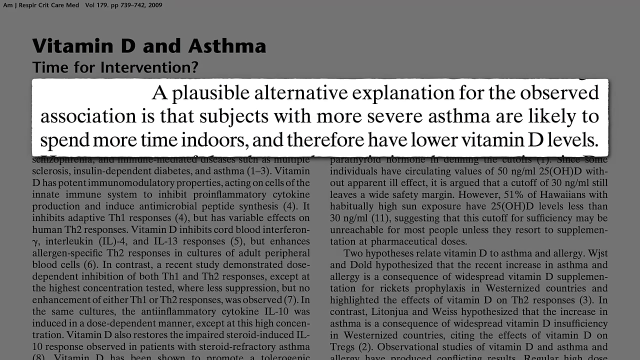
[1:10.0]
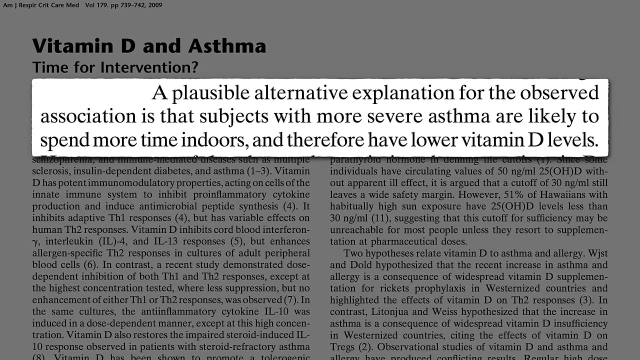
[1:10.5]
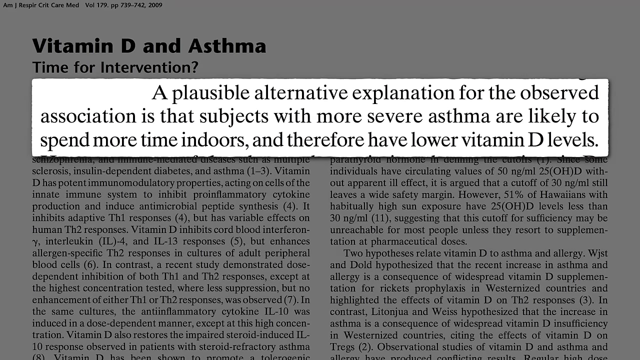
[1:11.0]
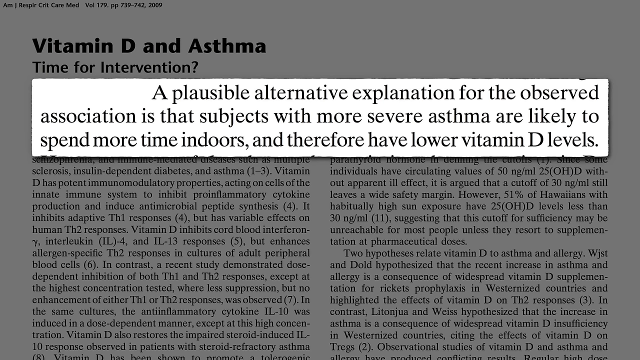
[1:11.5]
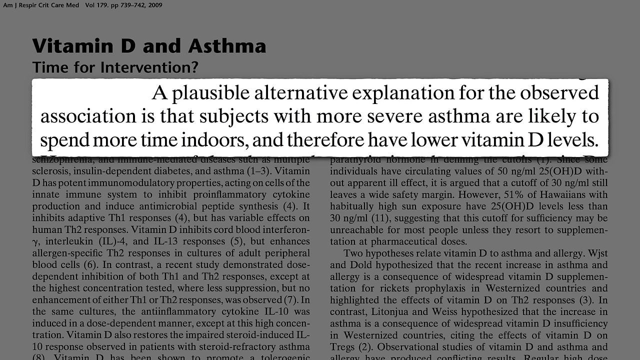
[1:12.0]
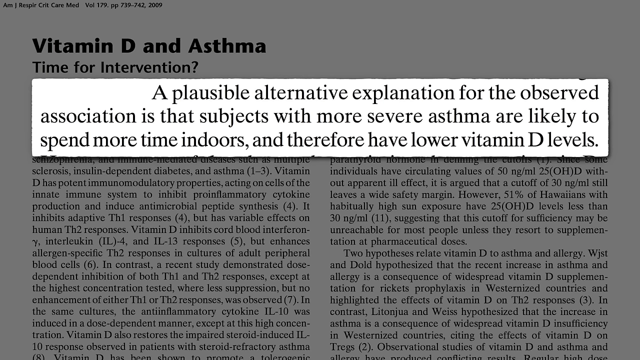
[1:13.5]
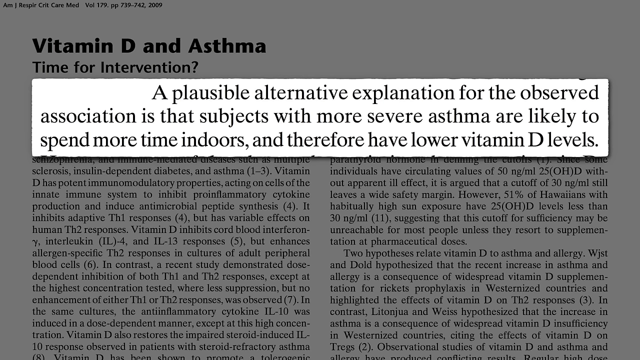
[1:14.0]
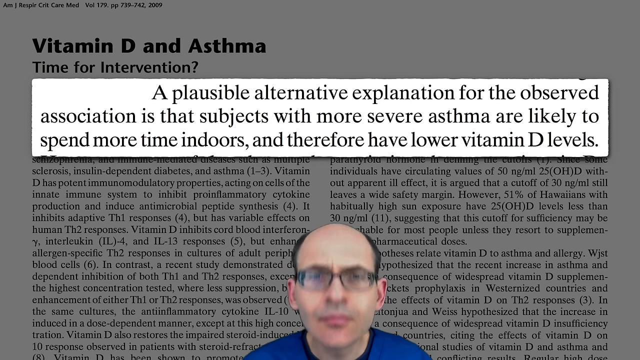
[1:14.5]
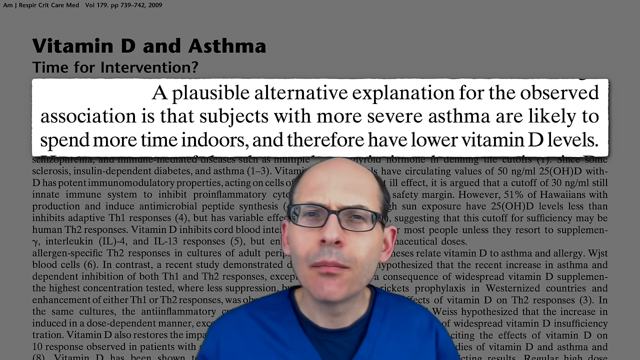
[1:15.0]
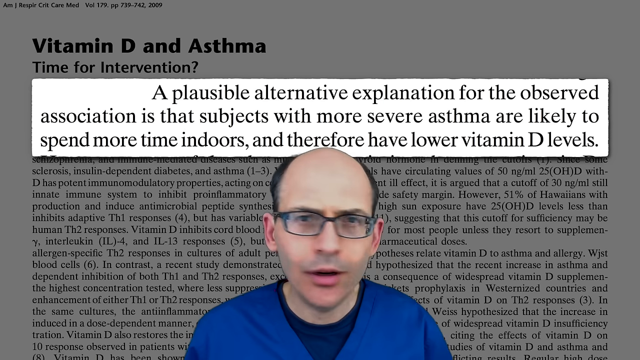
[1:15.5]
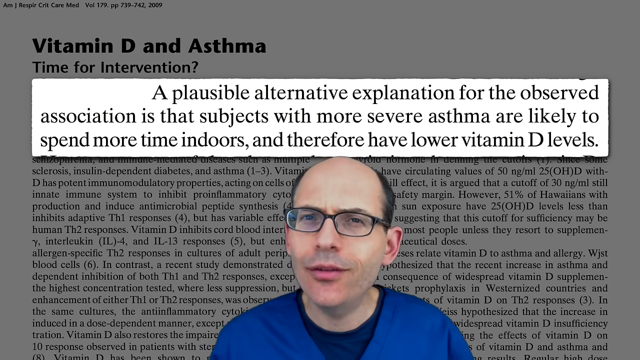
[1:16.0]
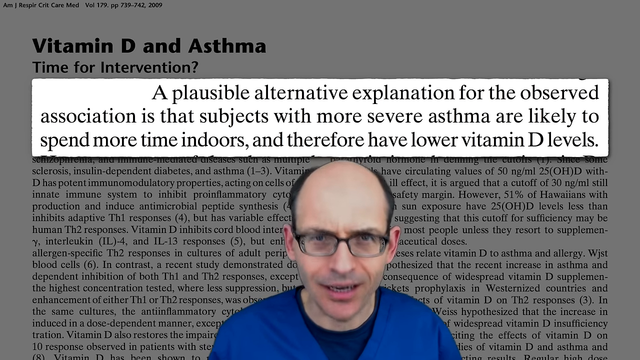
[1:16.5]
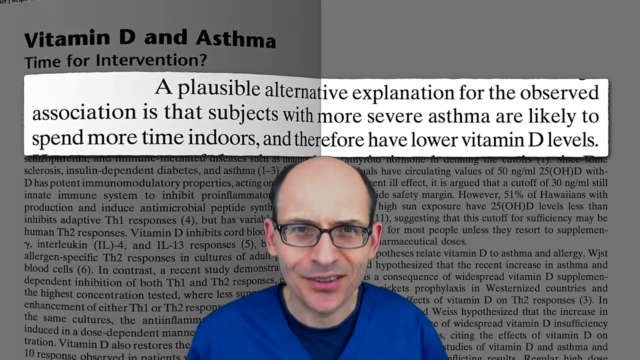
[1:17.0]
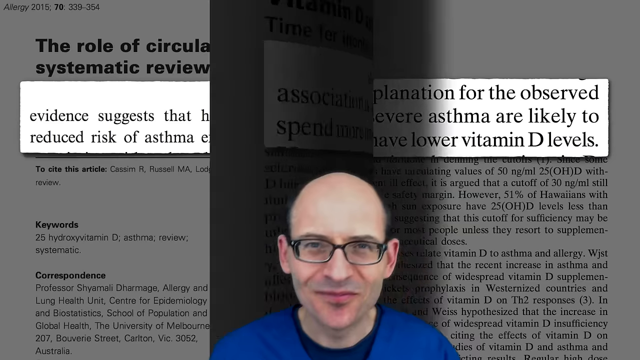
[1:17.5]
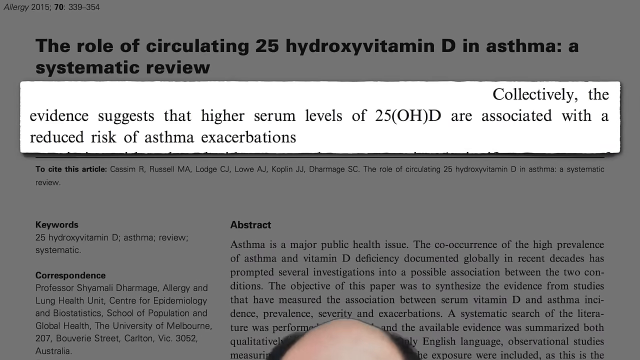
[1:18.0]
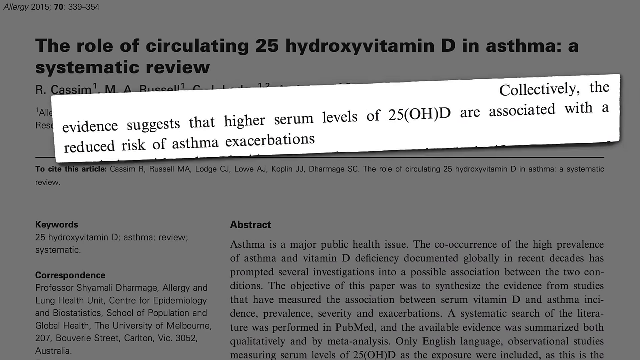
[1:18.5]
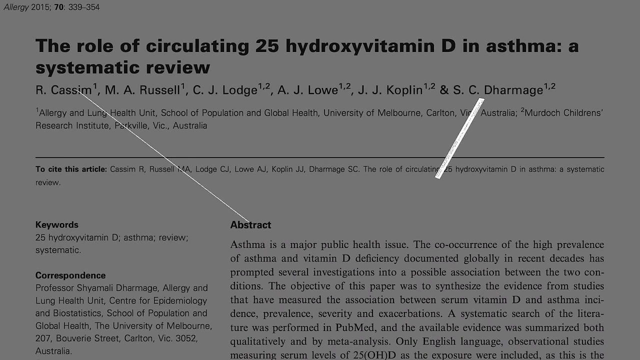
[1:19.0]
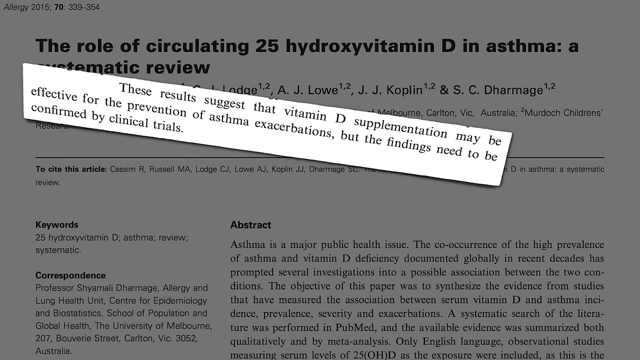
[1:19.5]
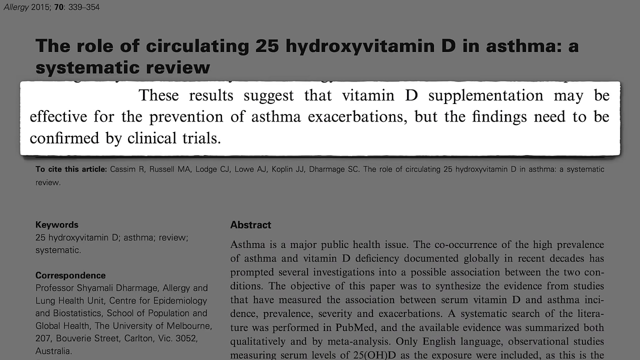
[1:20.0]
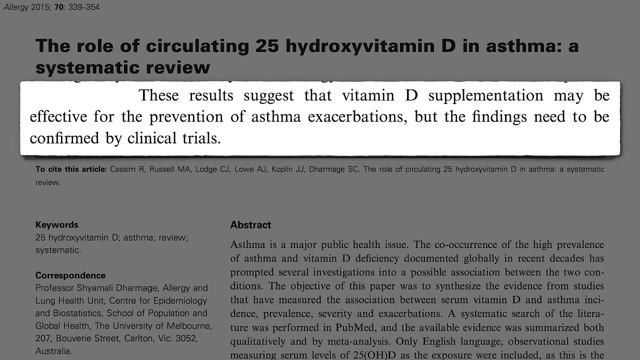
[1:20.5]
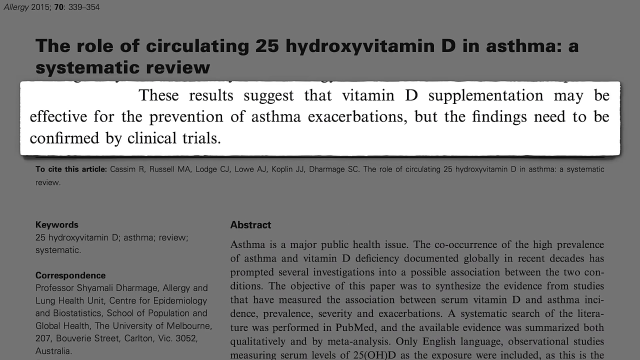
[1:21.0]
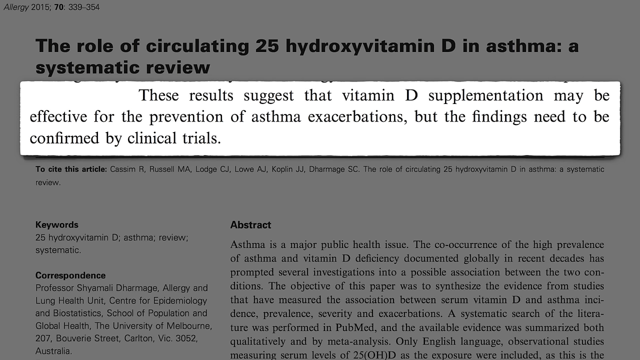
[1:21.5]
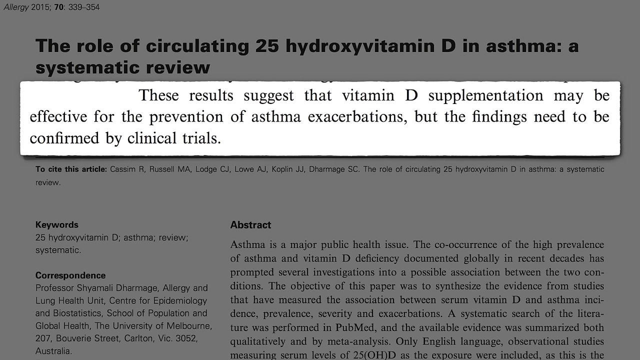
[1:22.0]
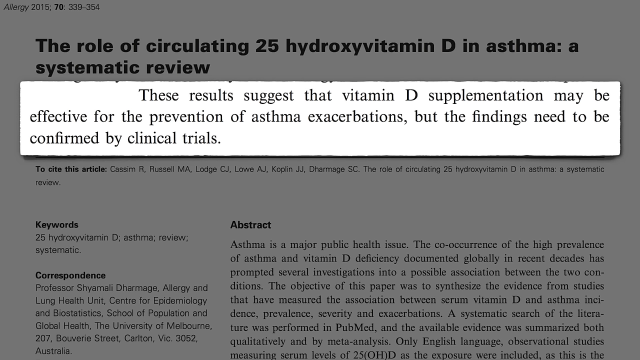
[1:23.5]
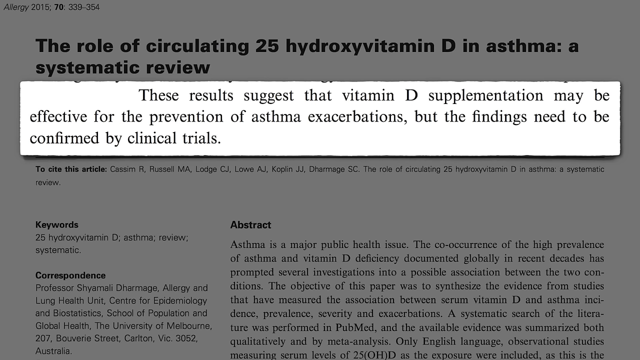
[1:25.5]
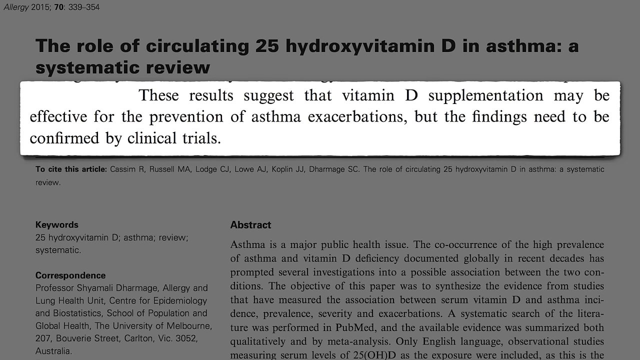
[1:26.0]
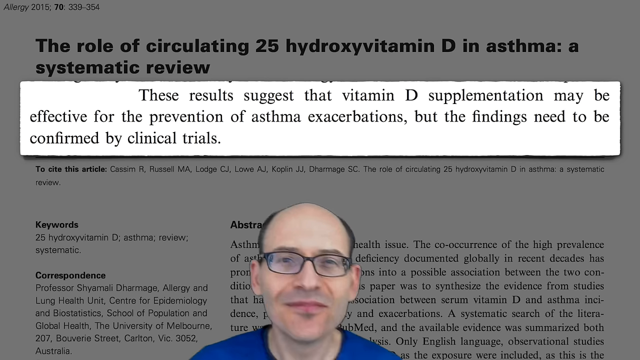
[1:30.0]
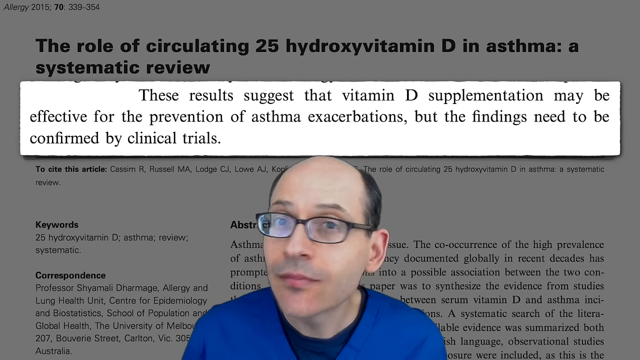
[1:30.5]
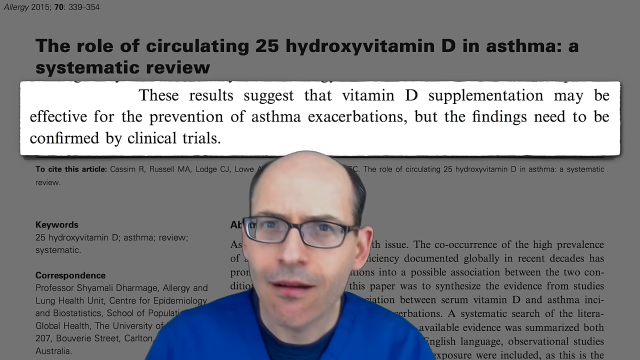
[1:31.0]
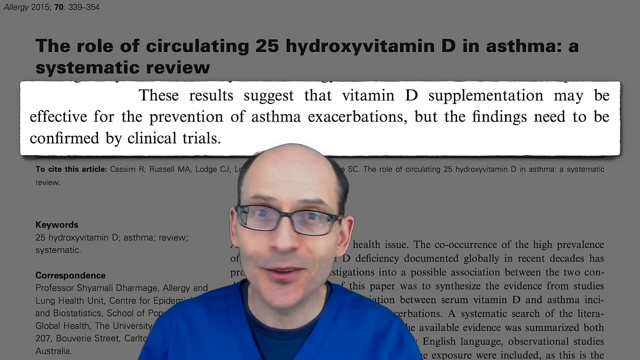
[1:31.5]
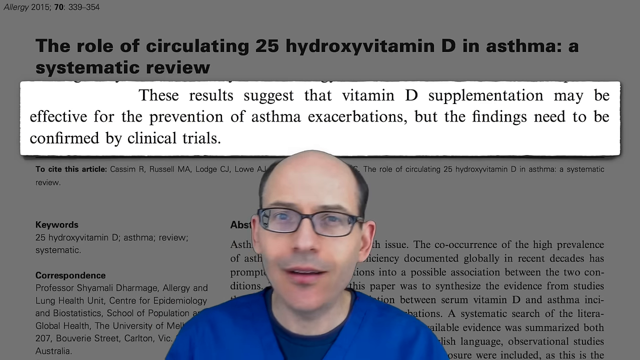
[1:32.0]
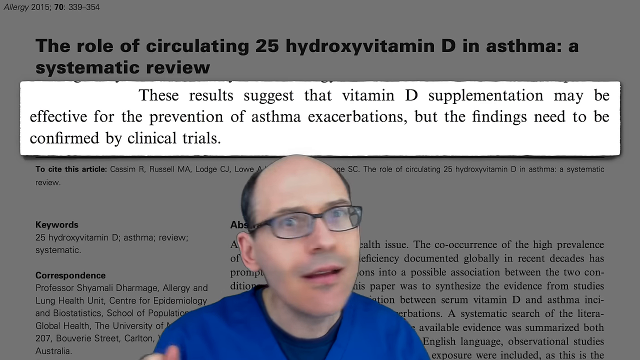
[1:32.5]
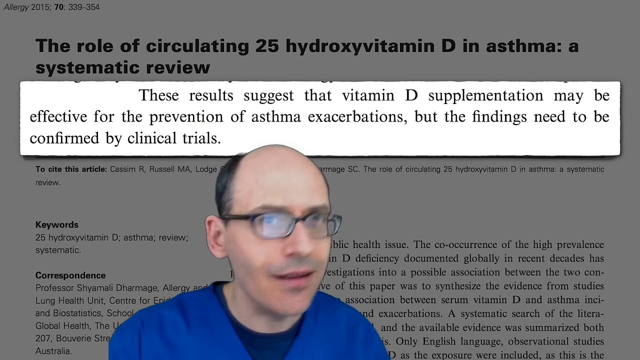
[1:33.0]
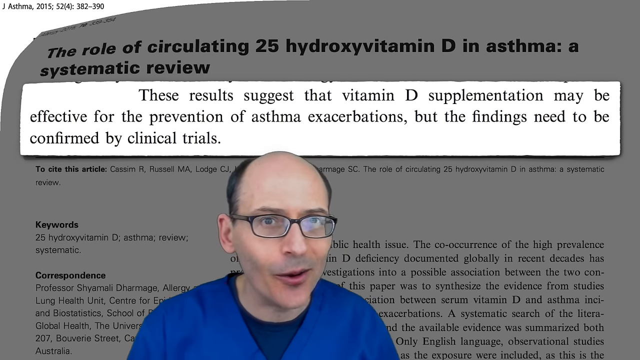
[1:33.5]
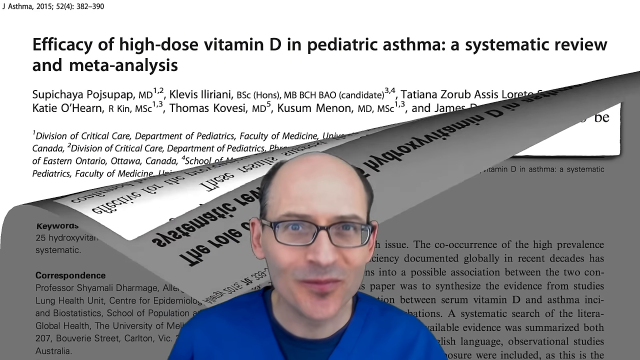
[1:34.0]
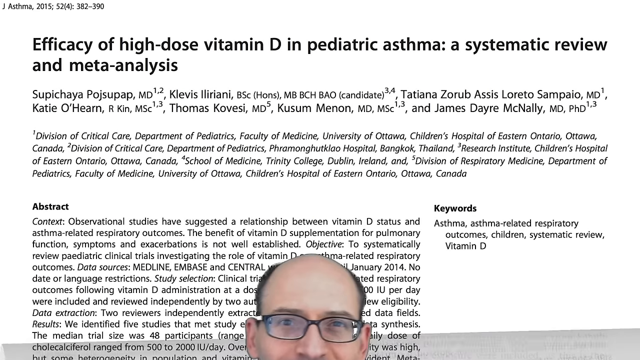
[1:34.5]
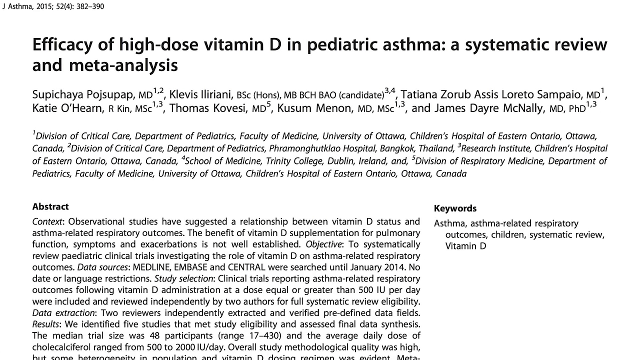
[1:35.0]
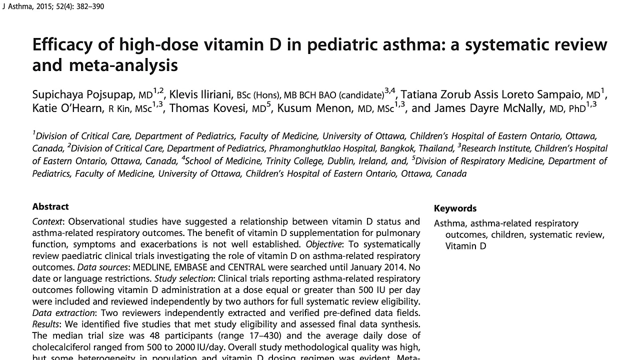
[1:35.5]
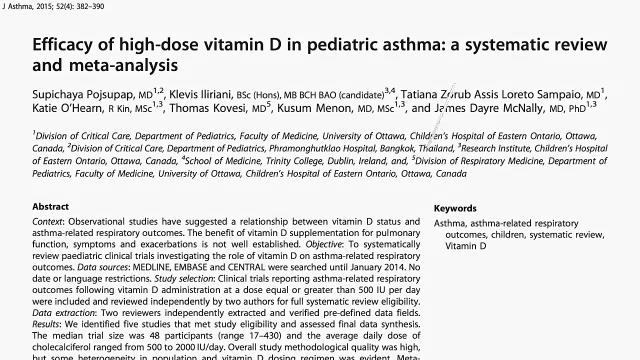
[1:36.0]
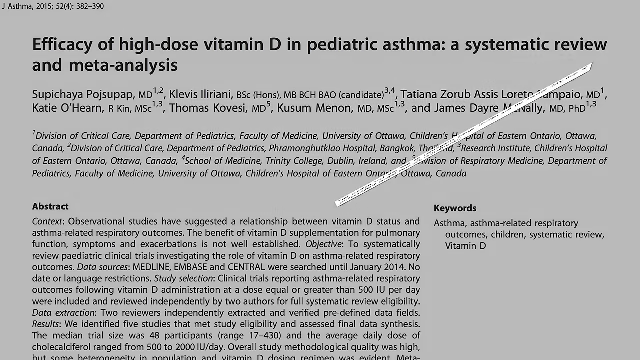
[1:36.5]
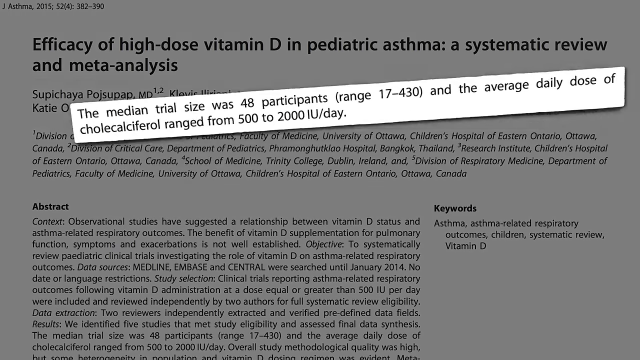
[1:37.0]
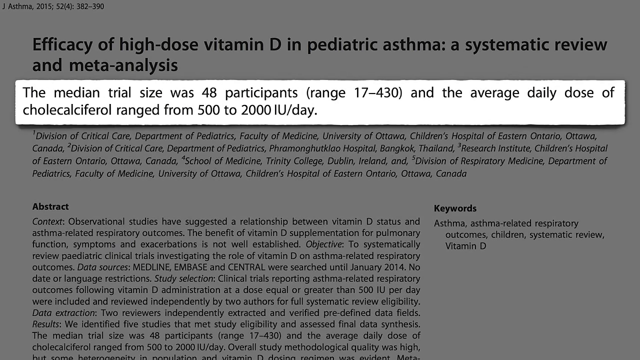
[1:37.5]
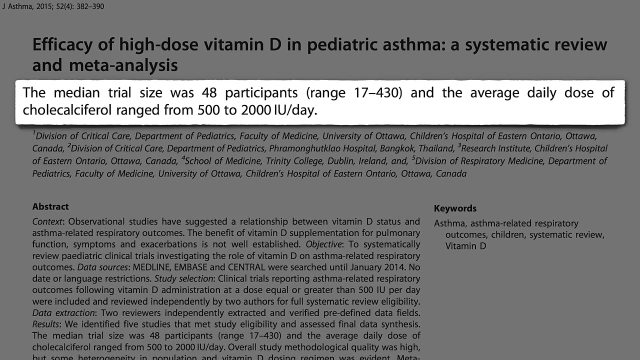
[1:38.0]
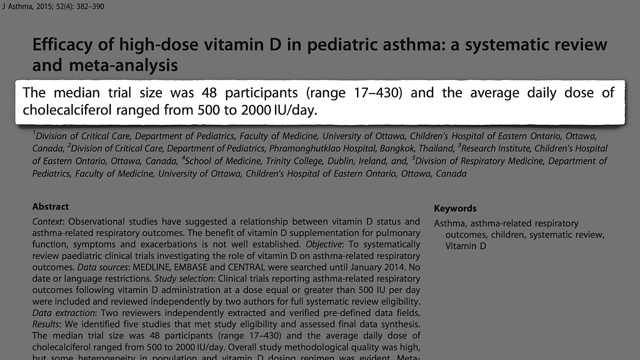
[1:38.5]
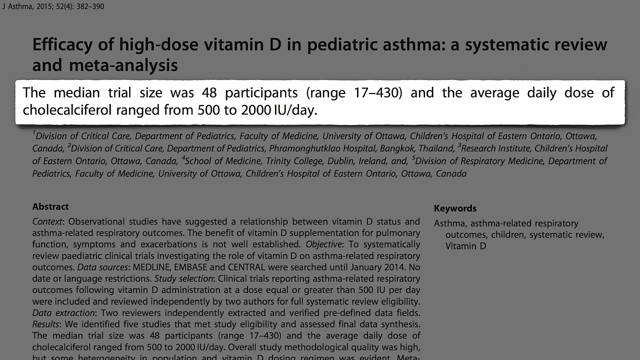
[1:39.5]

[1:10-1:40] In the background is the article titled "vitamin D and asthma", with "time for intervention?" below it, and in the center of the screen a long white rectangle shows the excerpt "a plausible alternative explanation for the observed association is that subjects with more severe asthma are likely to spend more time indoors and therefore have lower vitamin D levels." After several seconds, a man emerges in the center of the screen just below the excerpt. He wears dark glasses, has white skin, and is bald on top with dark hair on the sides. He begins smiling as he looks into the camera and says some words, then disappears. More excerpts then flash in the center of the screen; the last one reads "the median trial size was 48 participants and the average daily dose of cholecalciferol ranged from 500 to 2,000 IU per day."